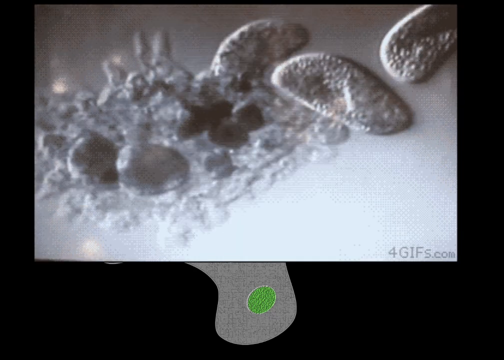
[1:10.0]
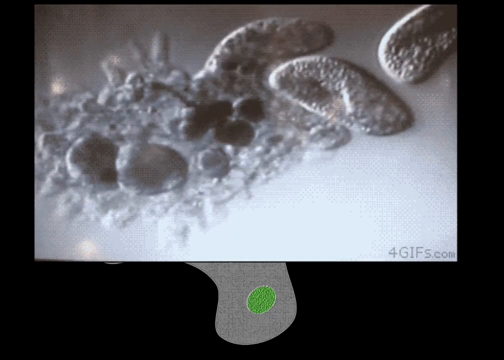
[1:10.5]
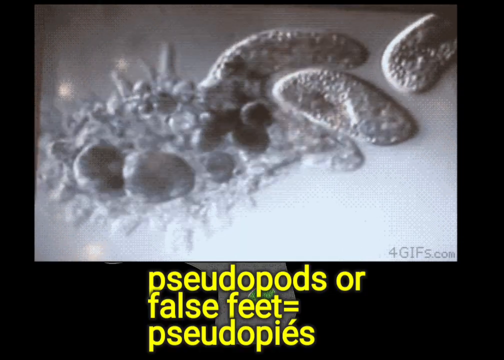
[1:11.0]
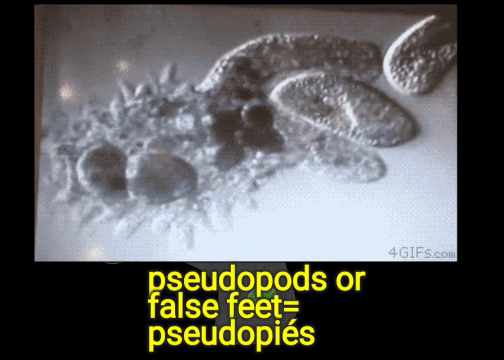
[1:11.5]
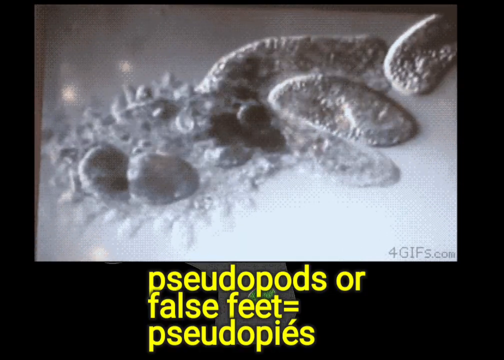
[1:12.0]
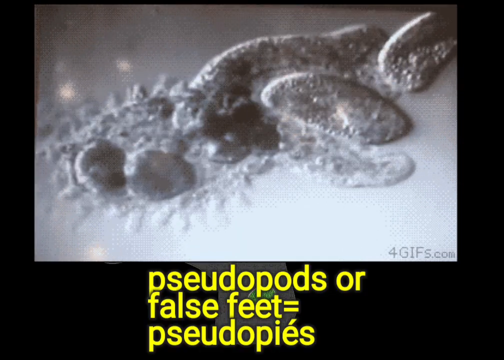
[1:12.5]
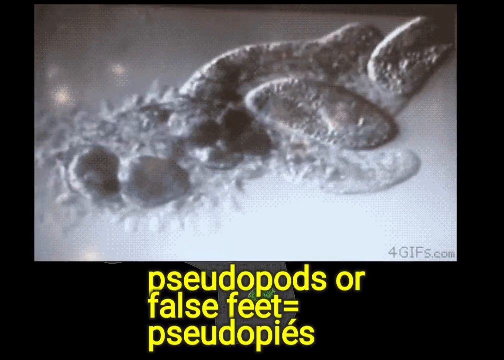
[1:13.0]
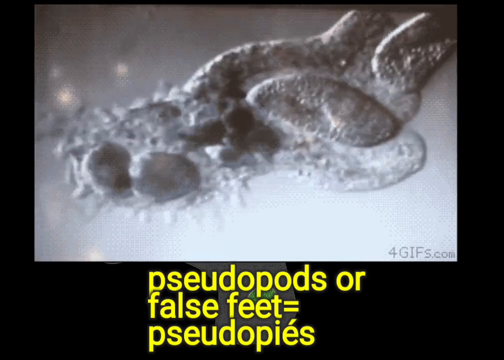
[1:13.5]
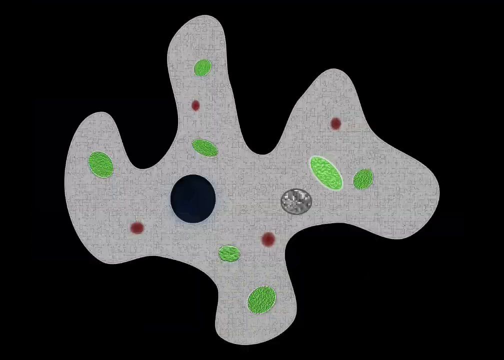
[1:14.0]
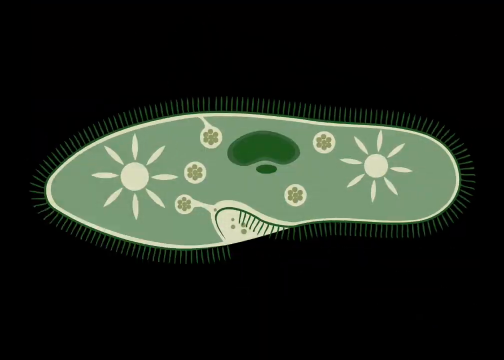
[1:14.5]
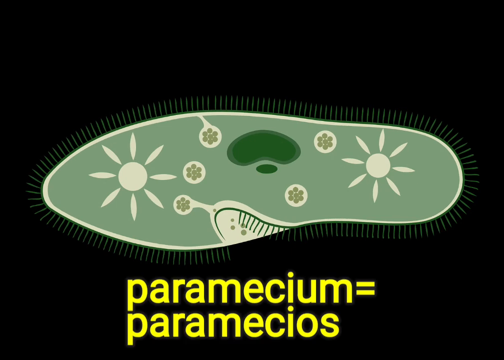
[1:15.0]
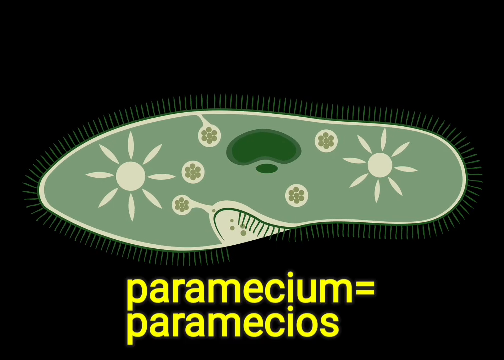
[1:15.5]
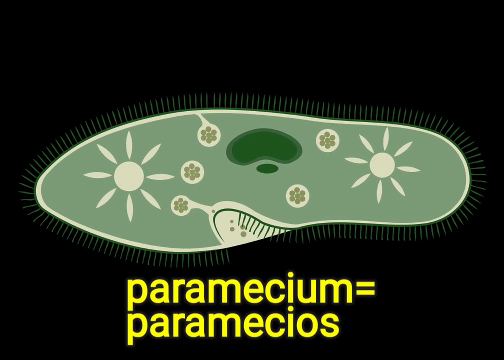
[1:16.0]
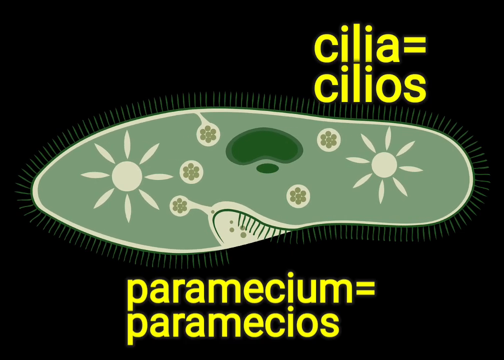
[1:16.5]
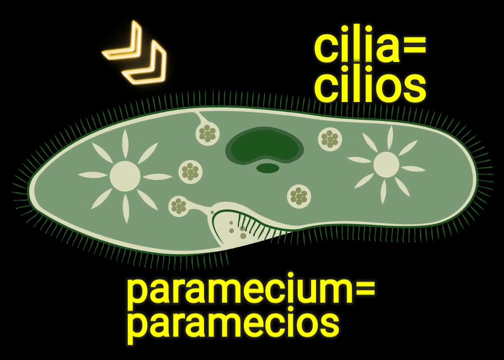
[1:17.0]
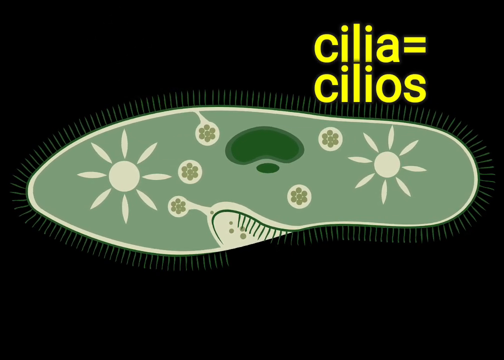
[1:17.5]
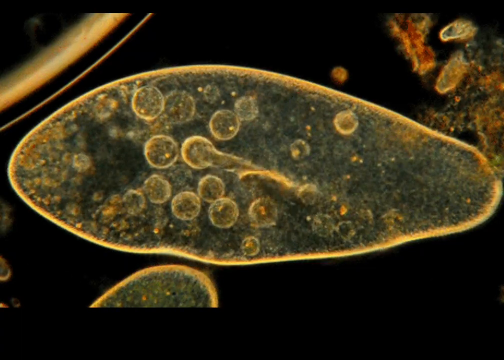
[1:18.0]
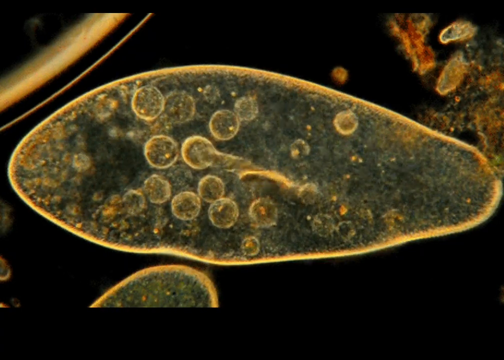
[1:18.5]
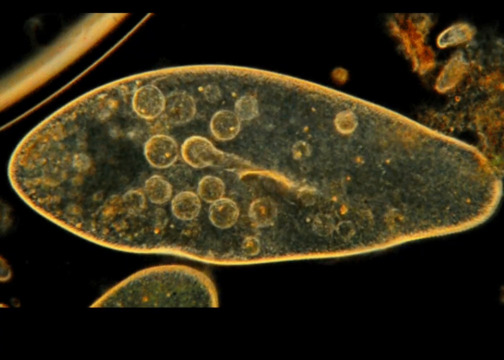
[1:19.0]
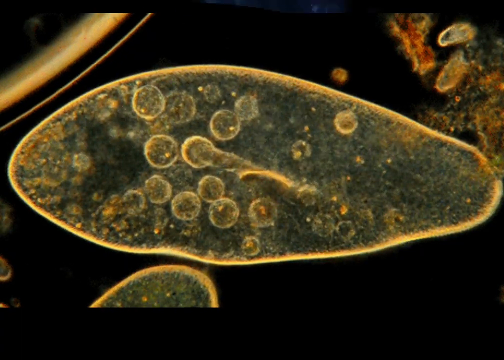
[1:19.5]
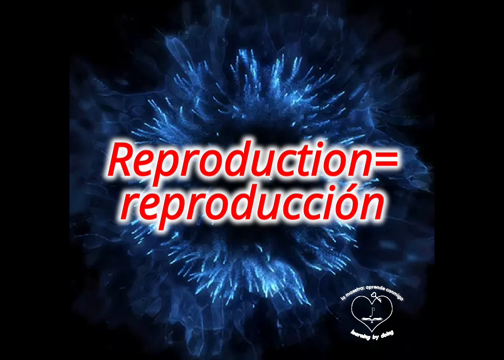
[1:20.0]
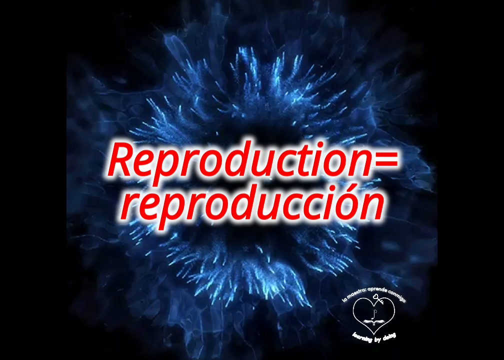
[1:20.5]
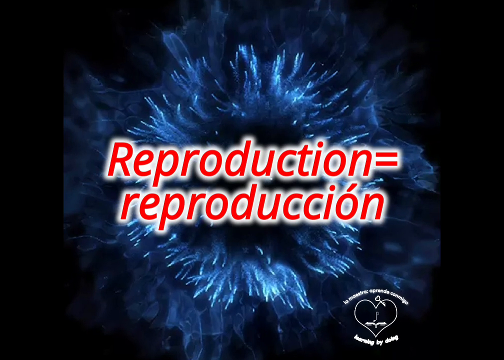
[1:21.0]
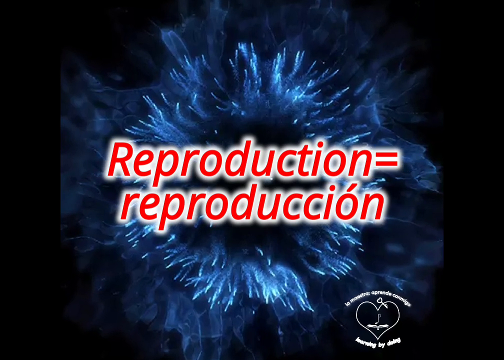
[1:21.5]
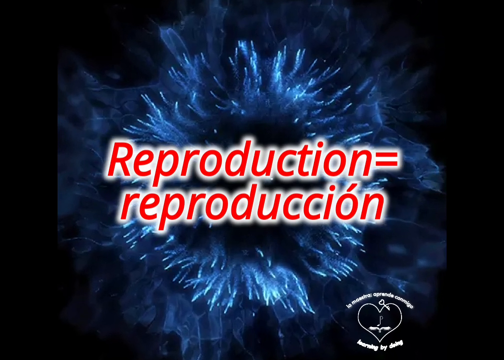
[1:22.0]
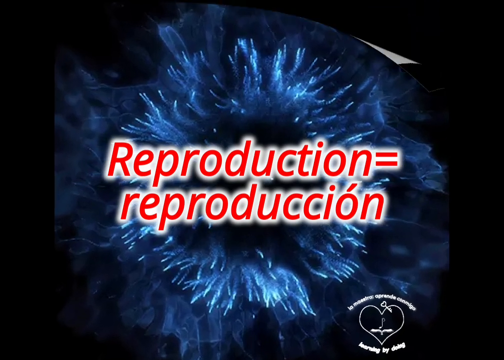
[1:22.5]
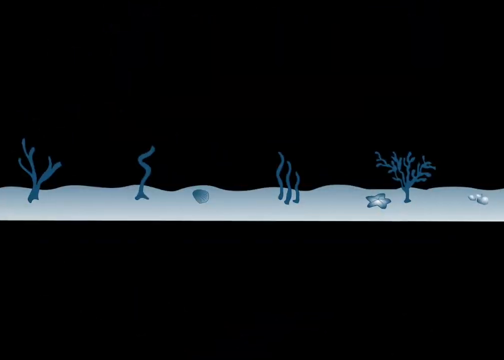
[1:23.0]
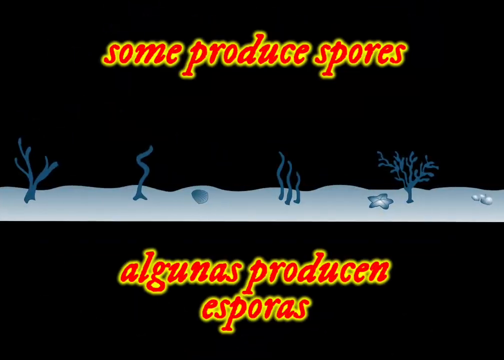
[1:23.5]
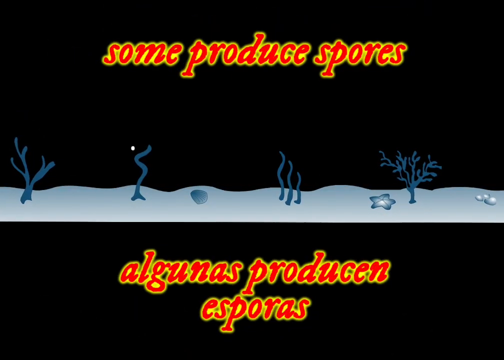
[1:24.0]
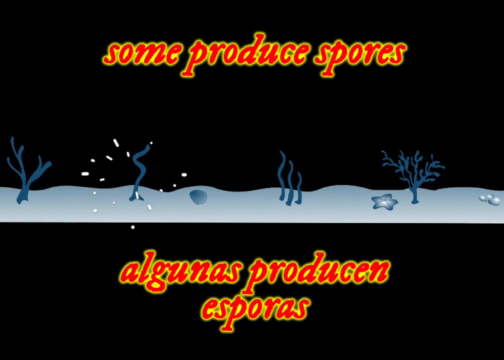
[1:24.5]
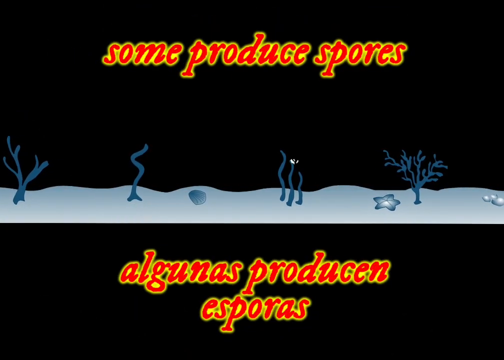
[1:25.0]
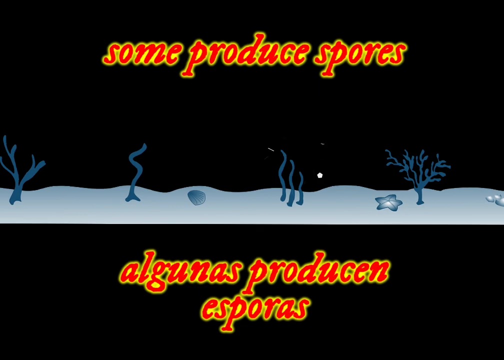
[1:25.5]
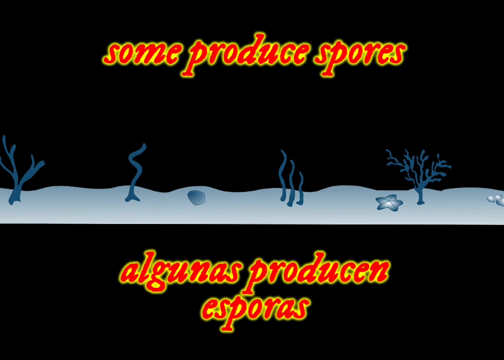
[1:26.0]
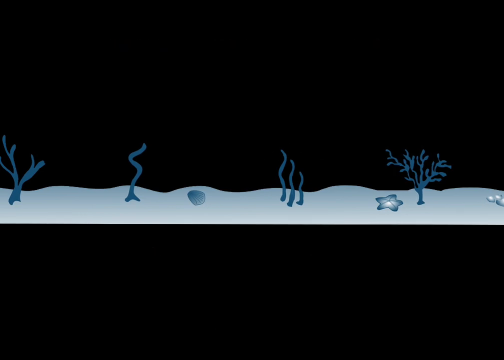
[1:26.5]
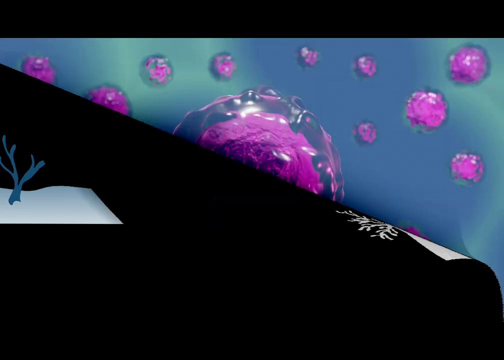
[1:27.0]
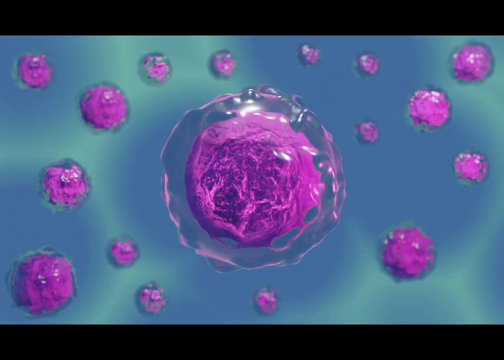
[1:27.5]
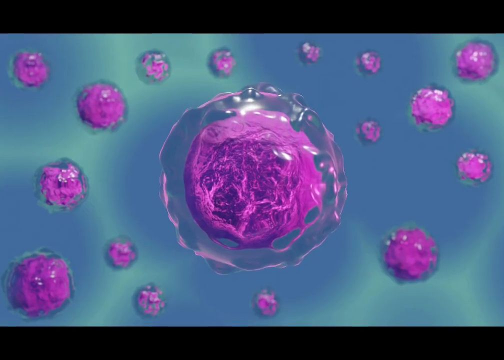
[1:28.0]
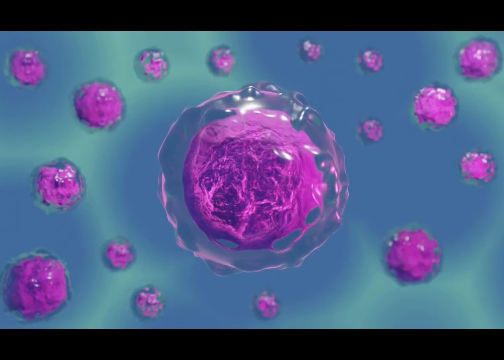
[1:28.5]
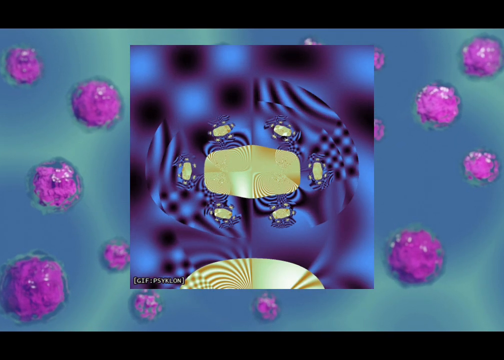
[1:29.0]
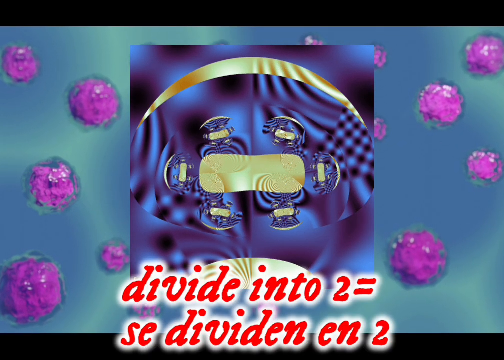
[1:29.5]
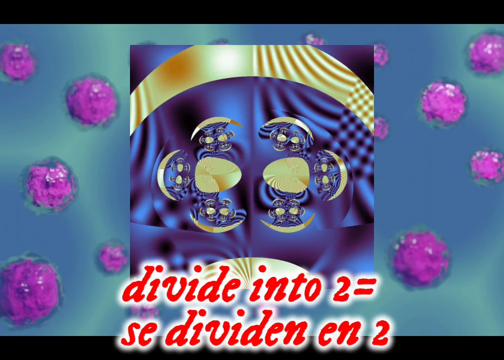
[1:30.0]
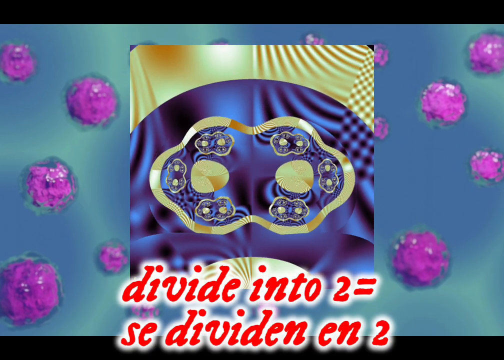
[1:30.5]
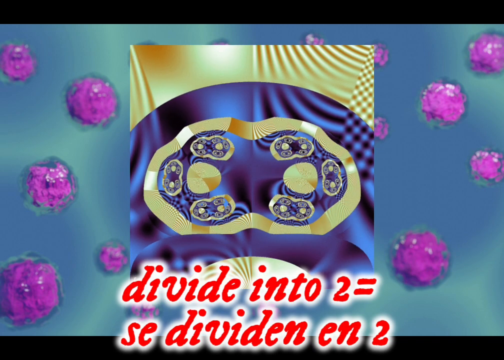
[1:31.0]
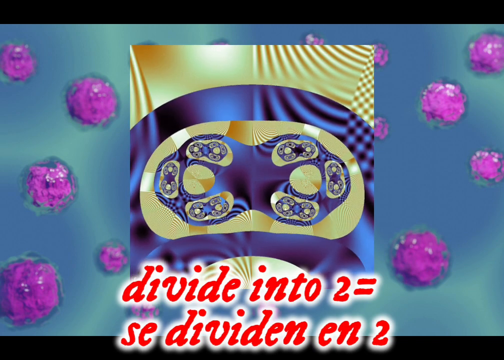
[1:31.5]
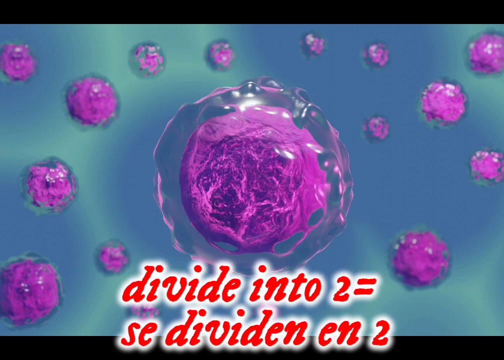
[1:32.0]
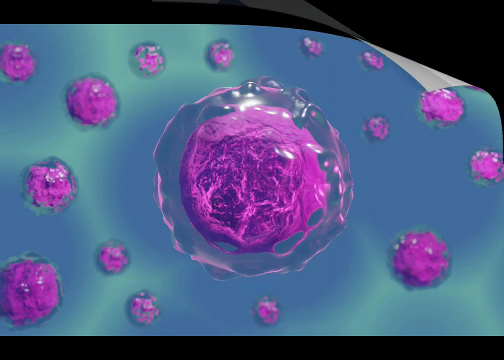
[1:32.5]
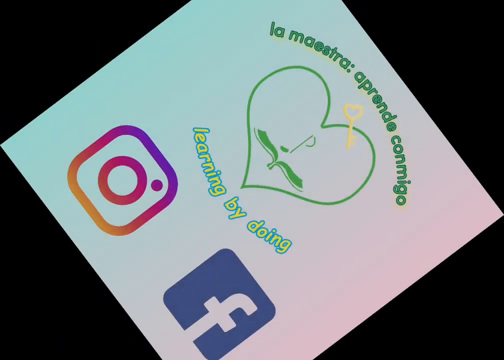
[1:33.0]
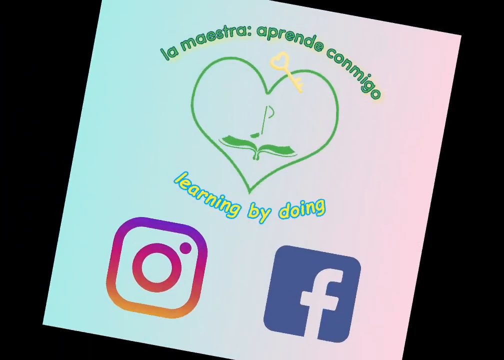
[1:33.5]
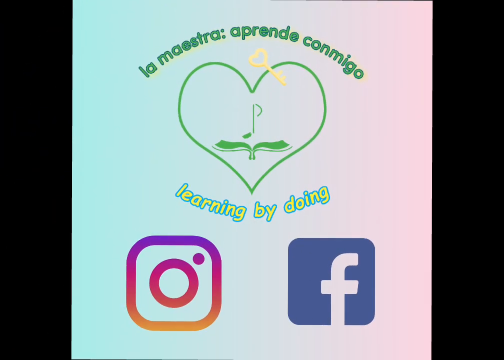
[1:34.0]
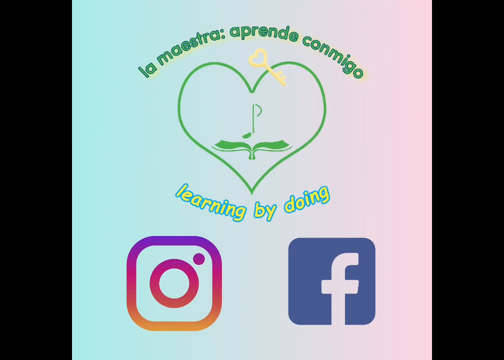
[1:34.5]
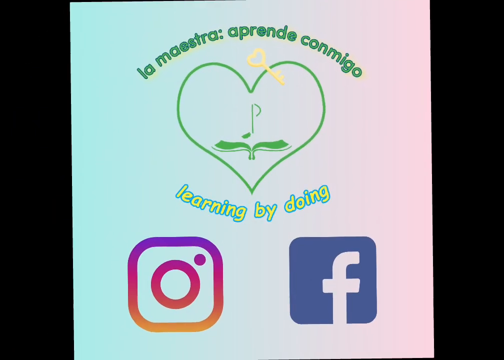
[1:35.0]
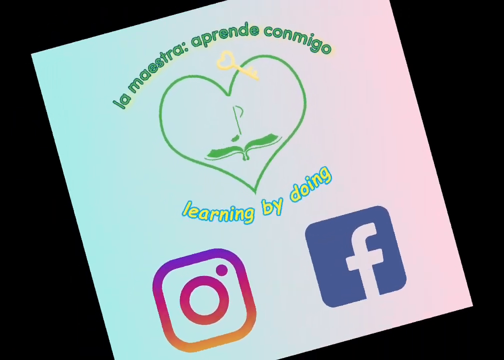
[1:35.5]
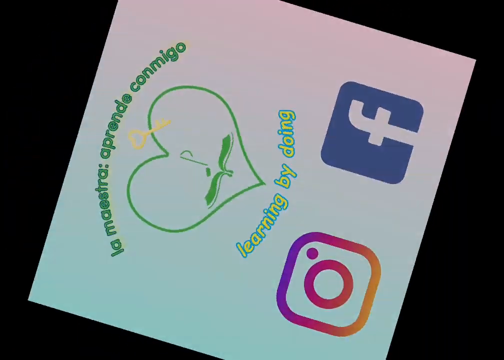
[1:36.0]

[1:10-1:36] The video shows what is inside the amoeba, then moves on to the paramecium and cilia. It kind of shows the reproduction of these microorganisms through spores, and how they divide into two and keep splitting into more microorganisms. The graphics go fast, and the illustrations show the cells growing and growing, with the cells moving. Most of the graphics are realistic visuals rather than cartoonish, though a few are cartoonish, and there is also a video showing what the organisms look like in real life under microscopes. At the end of the video, the creator's social media and contact information are shown.